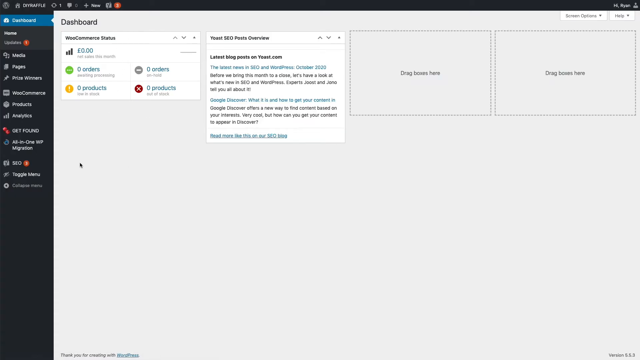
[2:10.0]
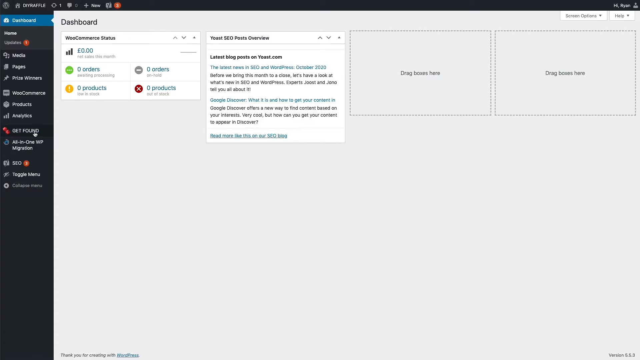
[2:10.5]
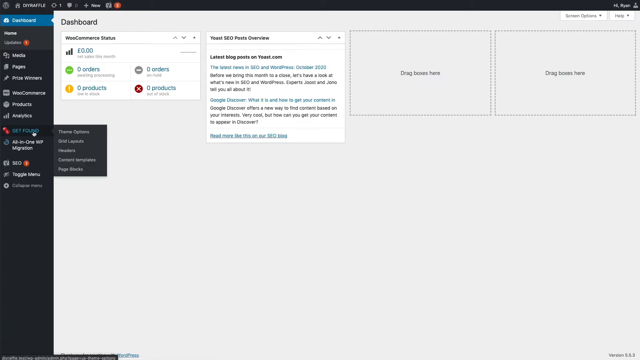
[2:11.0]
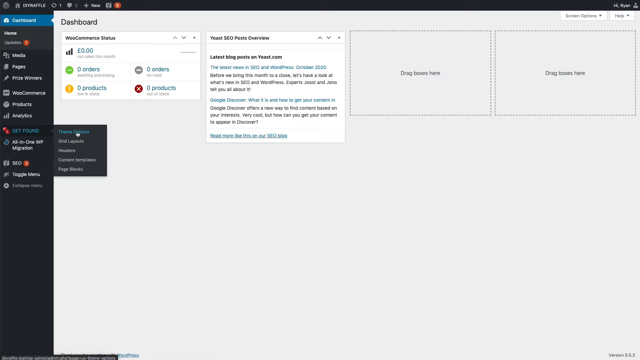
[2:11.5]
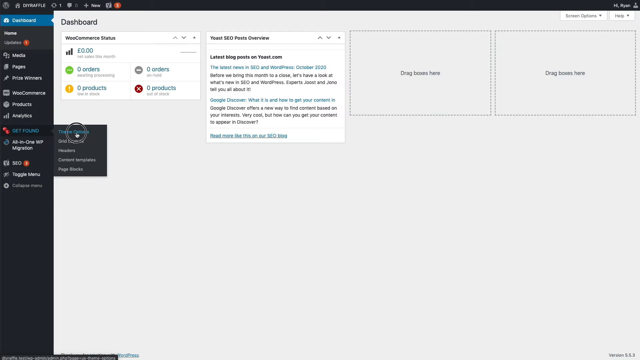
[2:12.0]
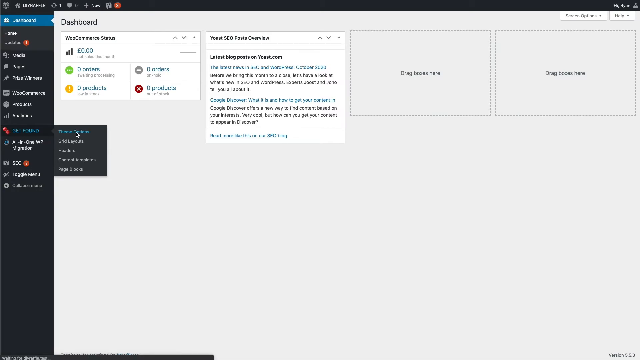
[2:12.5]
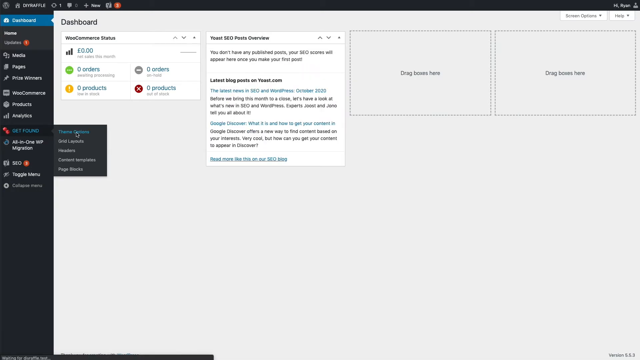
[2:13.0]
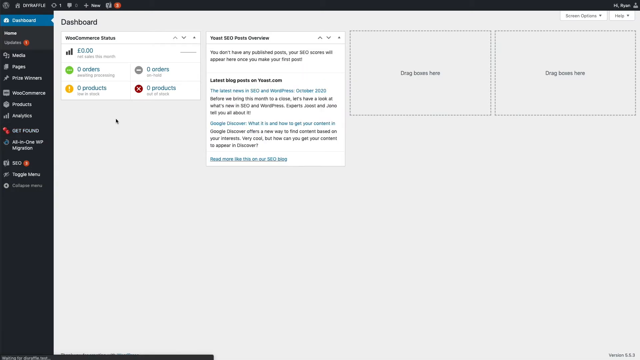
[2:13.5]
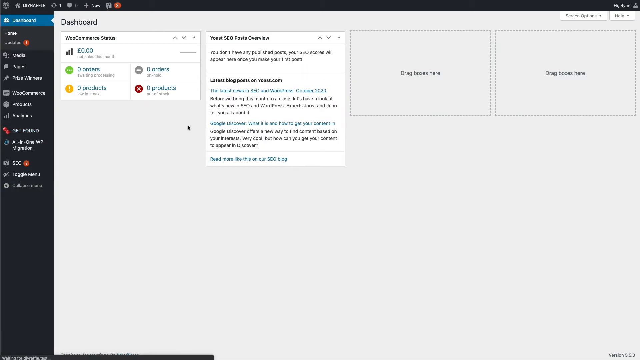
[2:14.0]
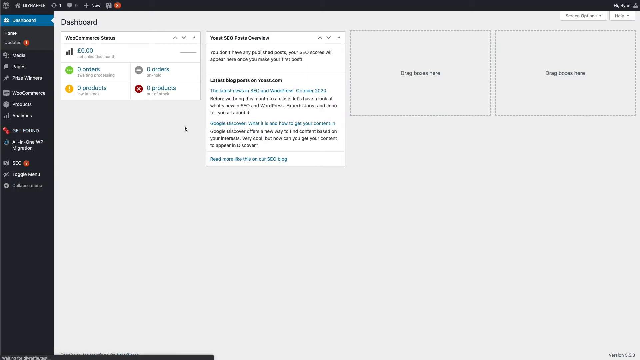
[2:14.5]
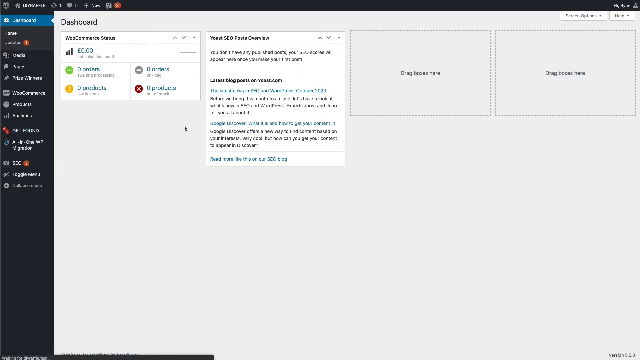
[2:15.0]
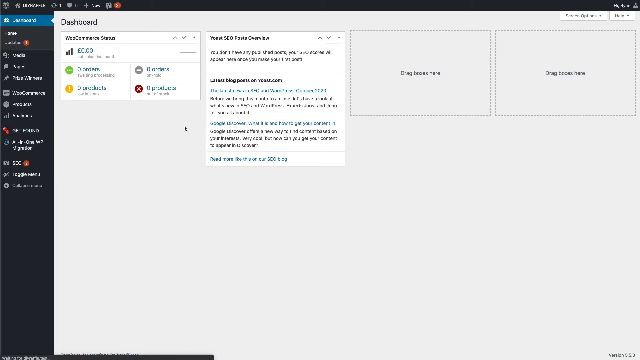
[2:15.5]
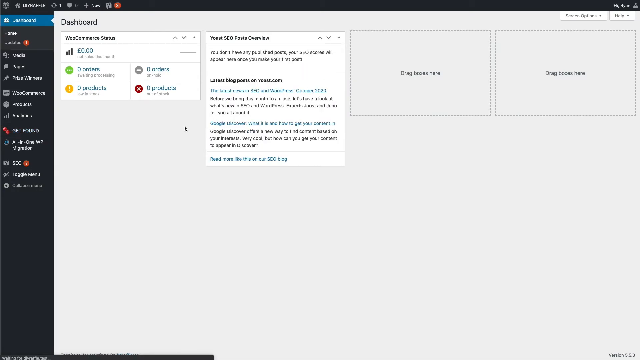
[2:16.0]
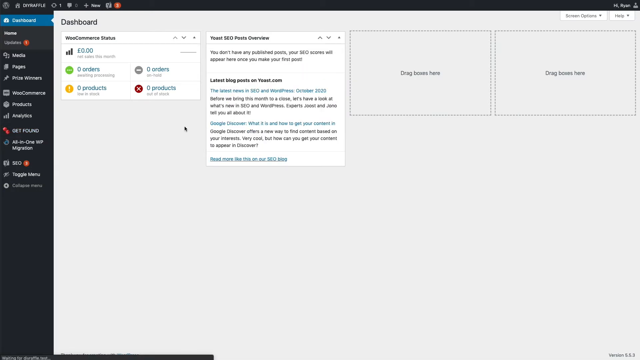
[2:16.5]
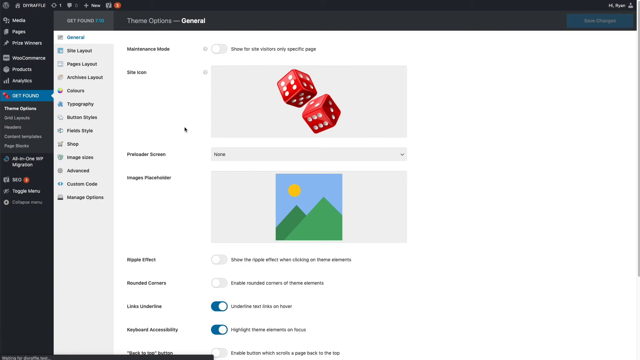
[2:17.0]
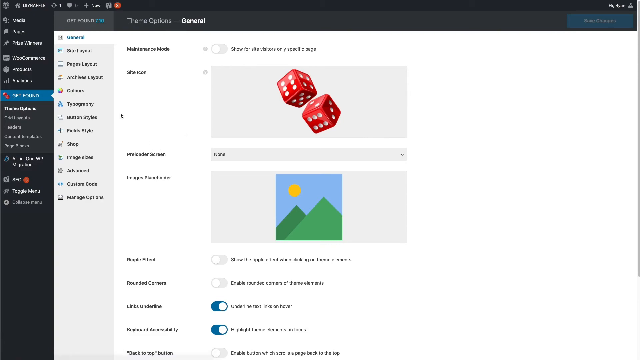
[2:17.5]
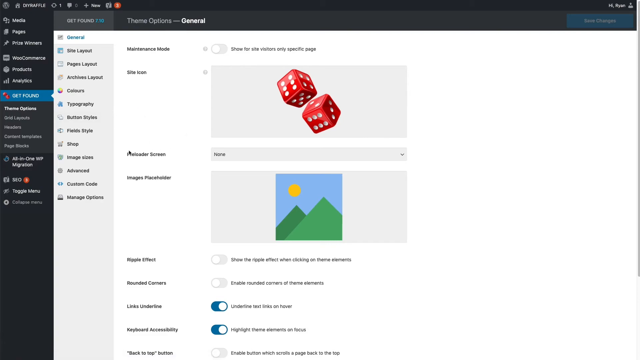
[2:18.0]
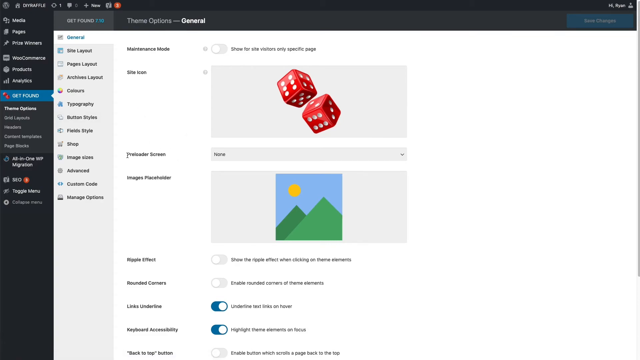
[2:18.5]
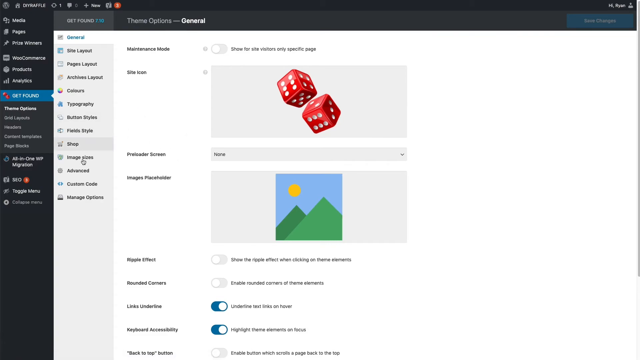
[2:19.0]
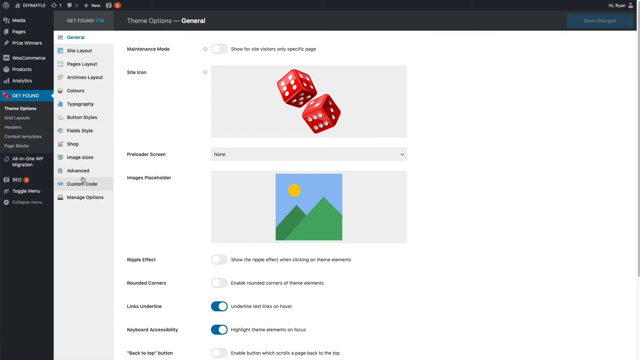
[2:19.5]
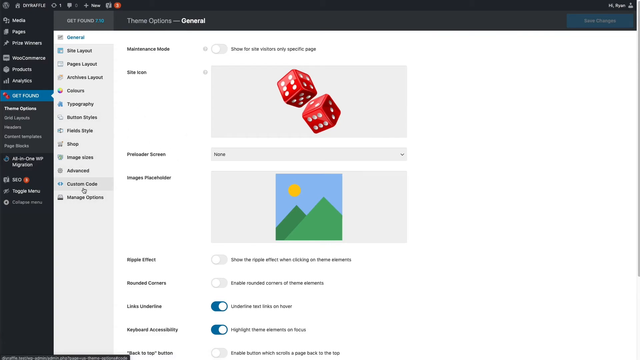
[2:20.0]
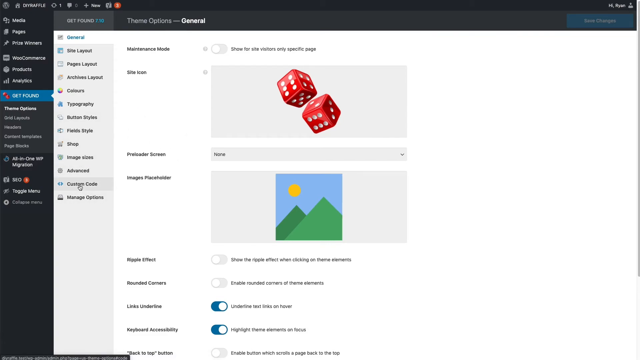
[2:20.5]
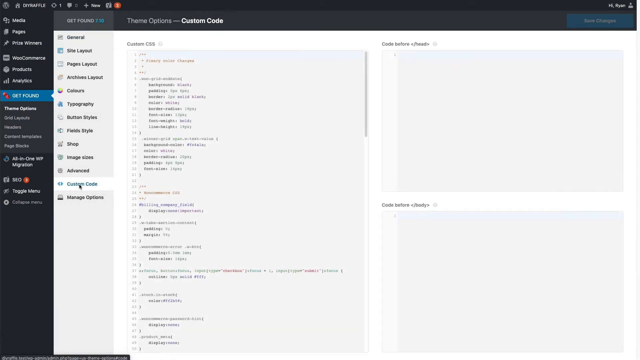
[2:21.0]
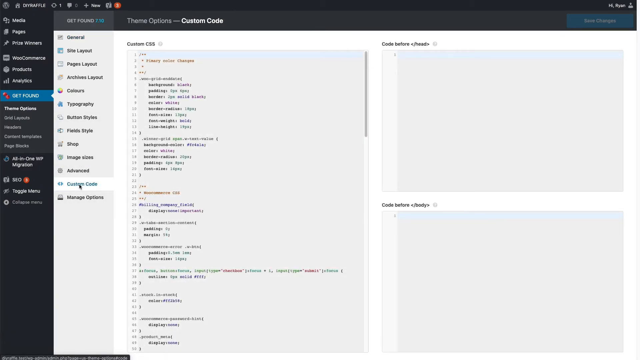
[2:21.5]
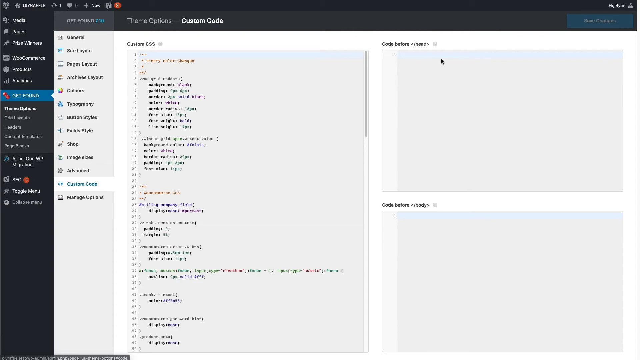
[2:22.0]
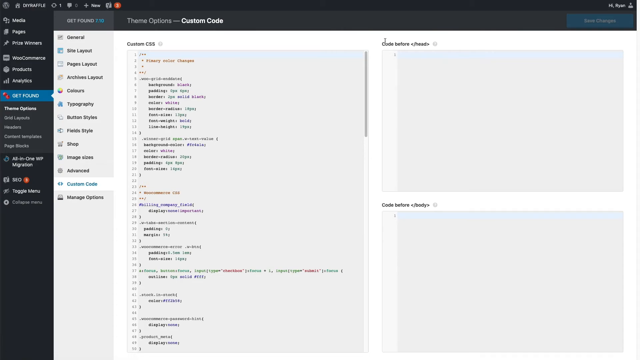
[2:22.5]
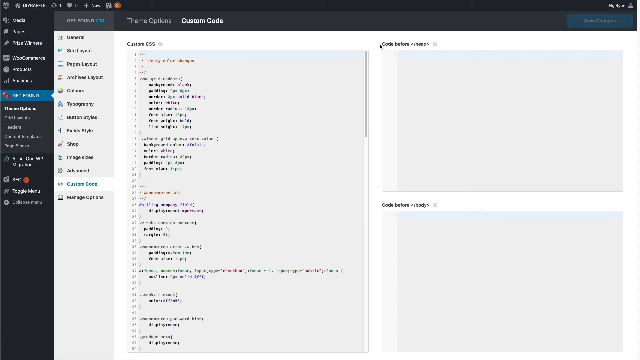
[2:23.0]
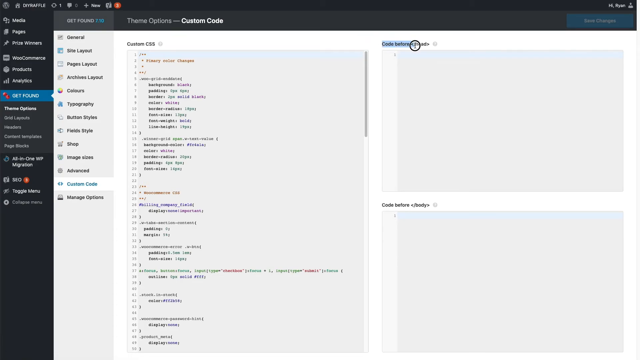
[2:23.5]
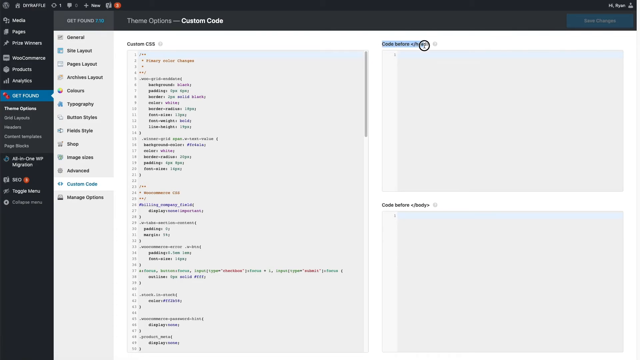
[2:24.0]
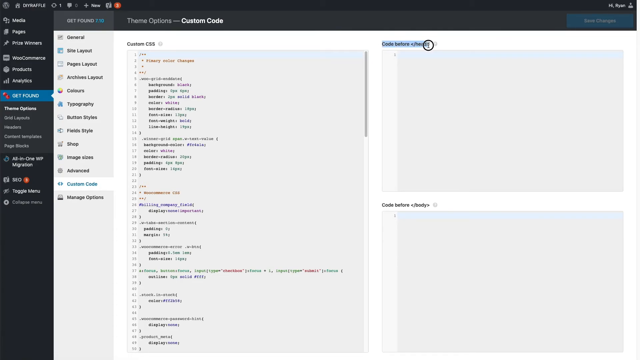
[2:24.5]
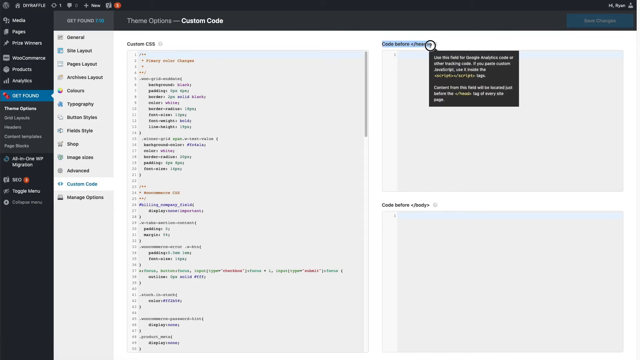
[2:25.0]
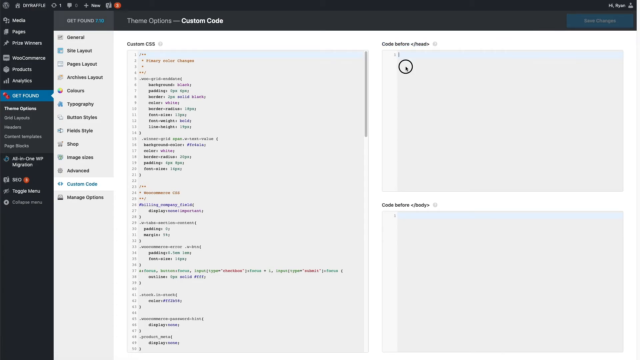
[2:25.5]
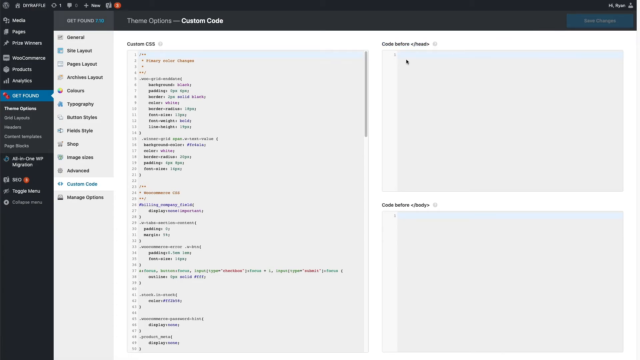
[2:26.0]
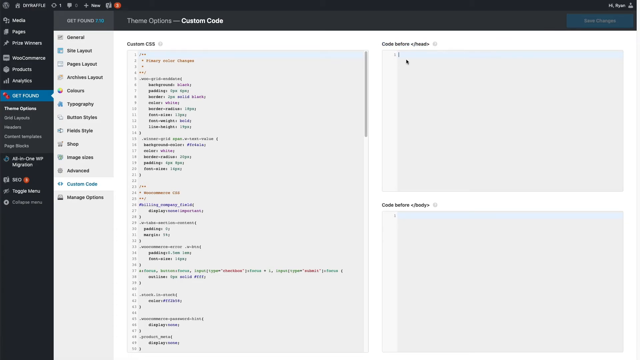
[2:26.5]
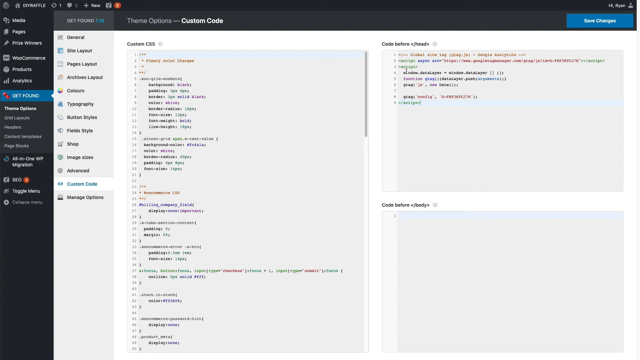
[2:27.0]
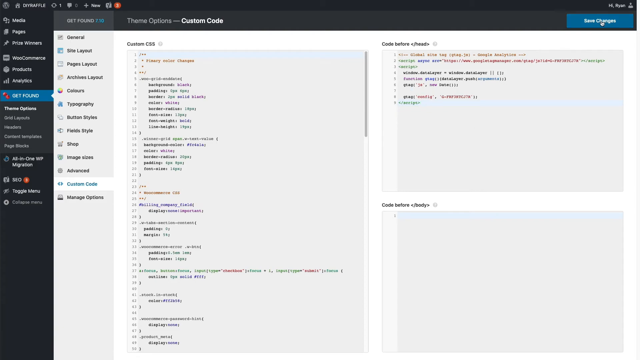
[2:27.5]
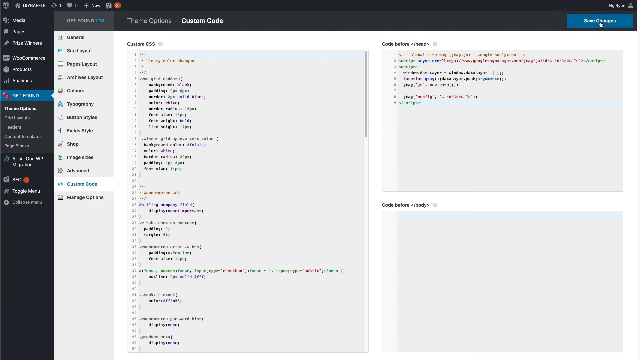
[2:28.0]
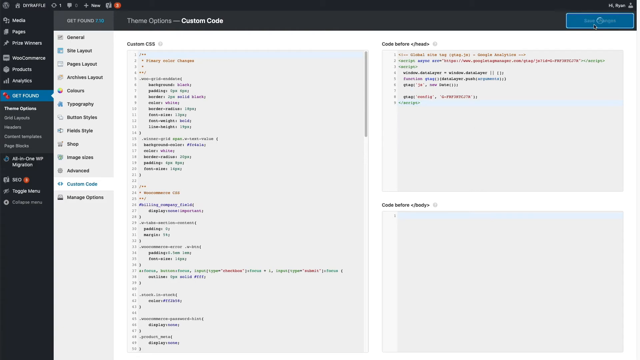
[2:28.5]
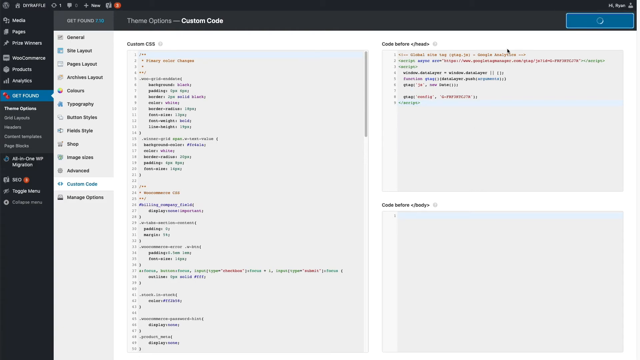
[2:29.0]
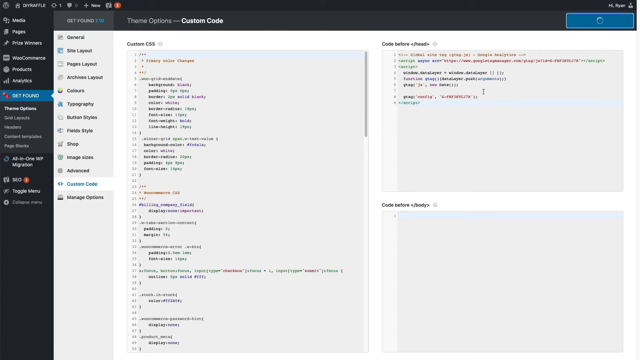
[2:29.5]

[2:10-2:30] On the dashboard, the person selects from a menu on the left; the screen is hard to read, but they apparently select a theme, bringing up SEO information and then a custom code option, seemingly to show how to make changes to the site's code. They choose the seventh item down on the initial menu, then the eighth item on the submenu that appears, which looks like a general menu. It apparently shows maintenance mode and text reading "show for the visitors only specific page." There is a graphic of a pair of red dice with white dots. A preloader screen setting is set to none. An image placeholder shows a generic animated image of two green mountains, a blue sky and a yellow sun. What appears to be ripple effect is not selected, rounding corners is not selected, links underline is selected, and "Evore accessibility" is selected. They then select custom code under the general menu.